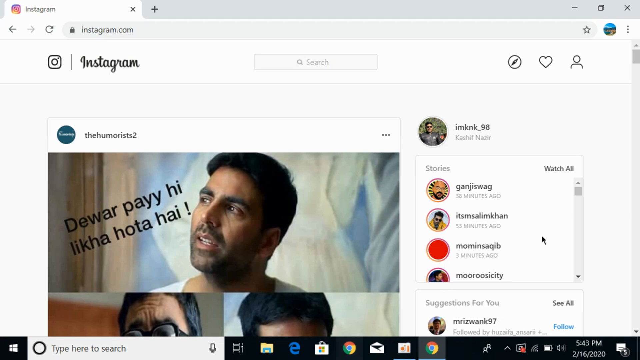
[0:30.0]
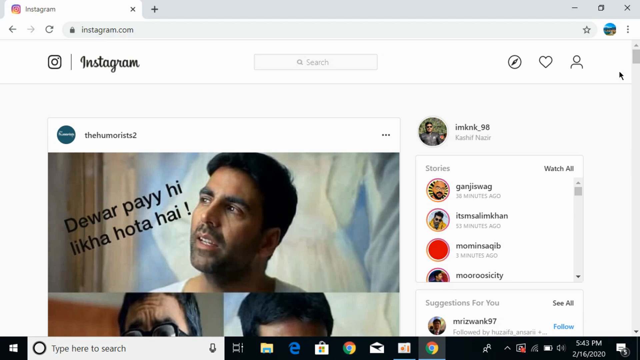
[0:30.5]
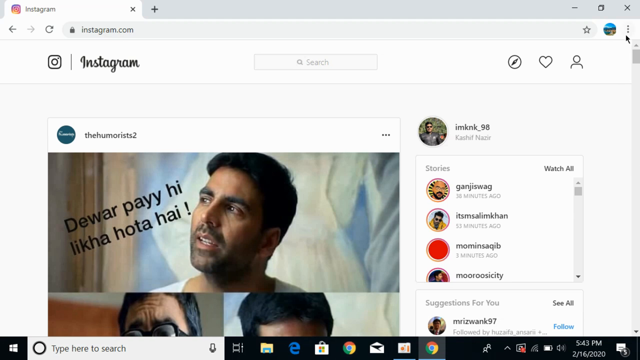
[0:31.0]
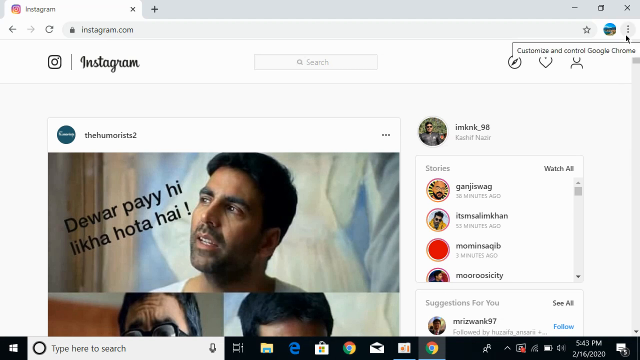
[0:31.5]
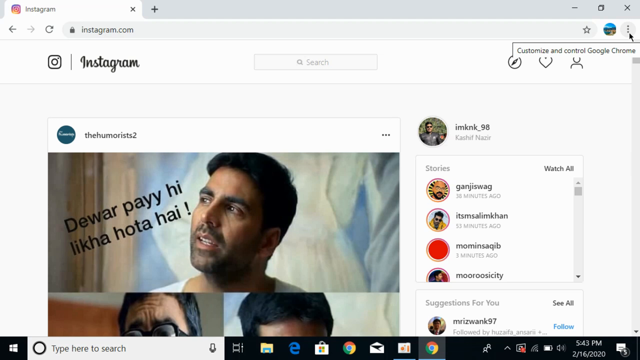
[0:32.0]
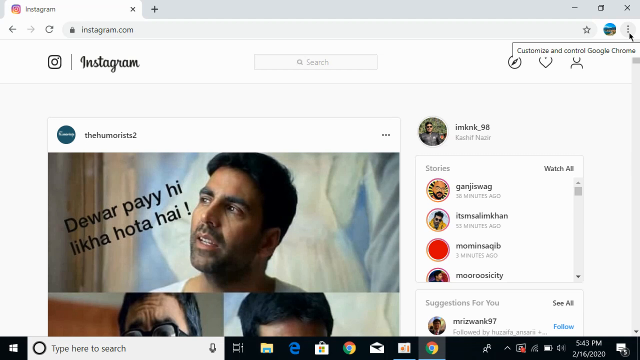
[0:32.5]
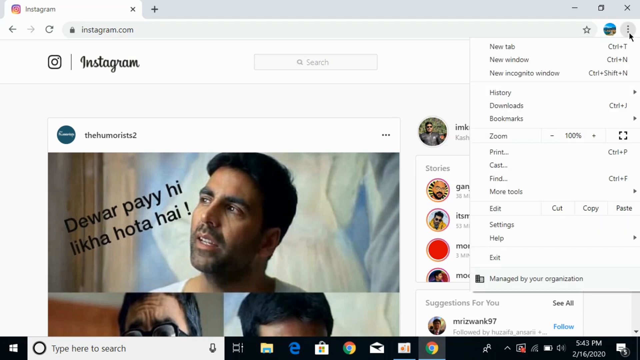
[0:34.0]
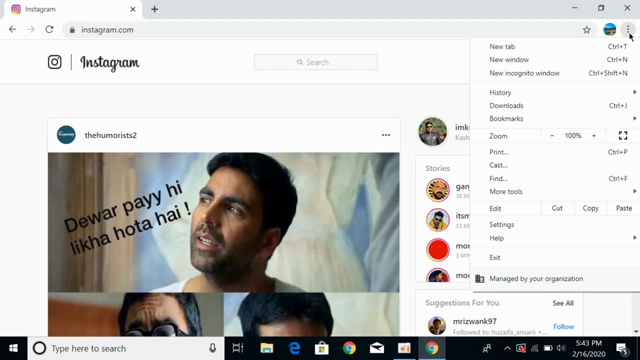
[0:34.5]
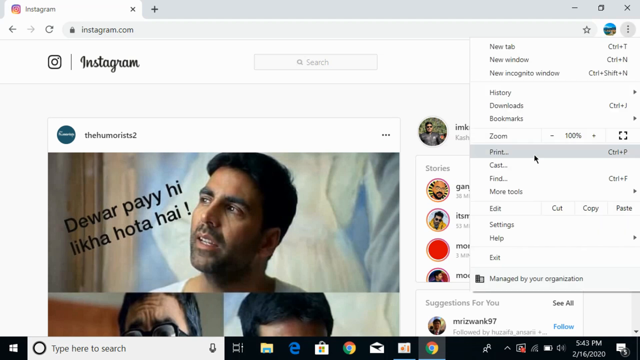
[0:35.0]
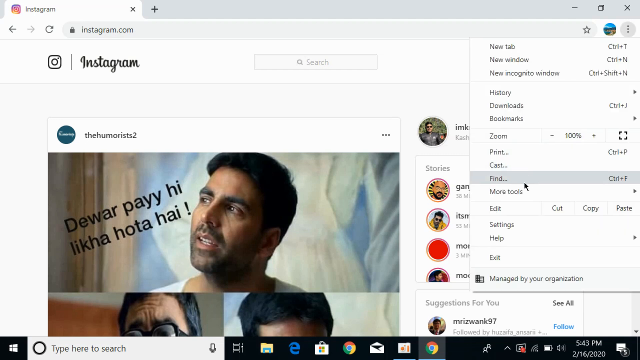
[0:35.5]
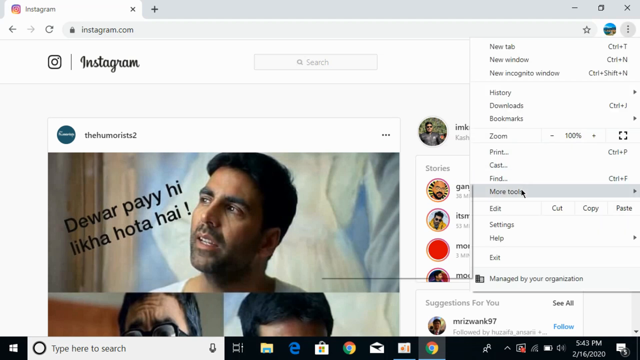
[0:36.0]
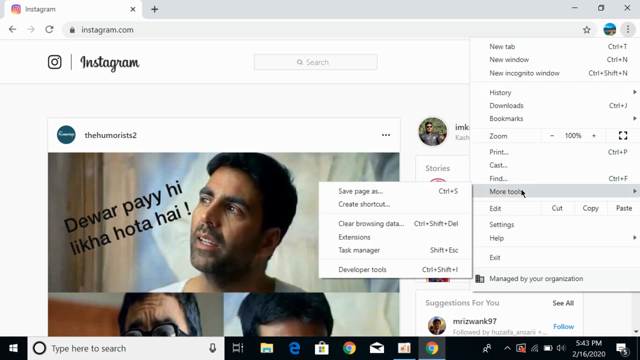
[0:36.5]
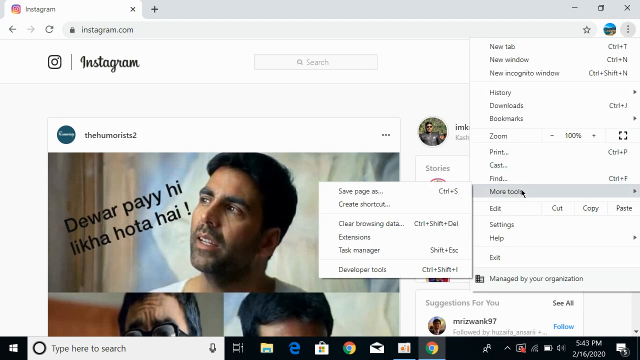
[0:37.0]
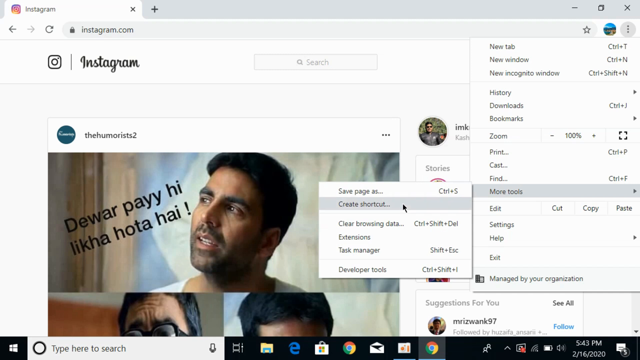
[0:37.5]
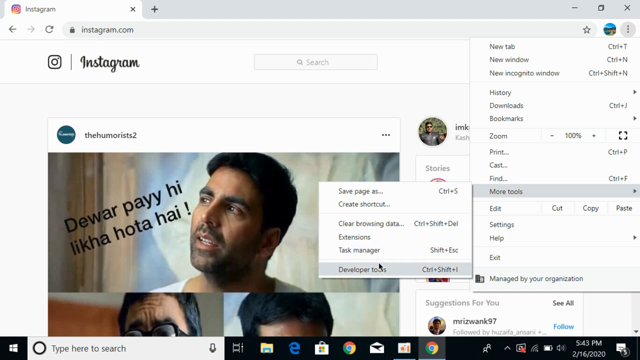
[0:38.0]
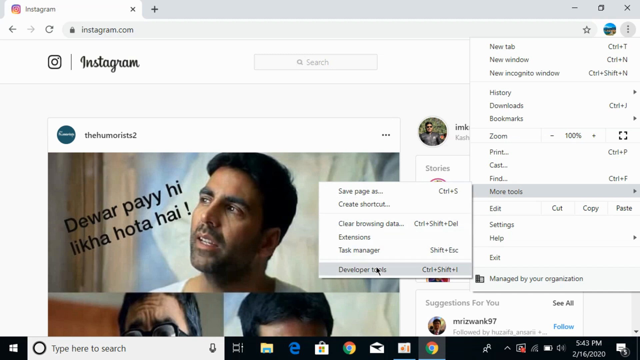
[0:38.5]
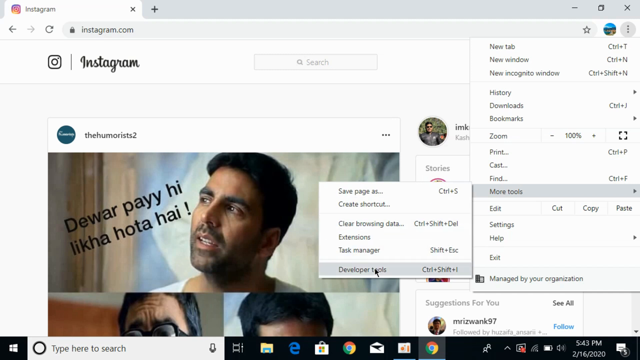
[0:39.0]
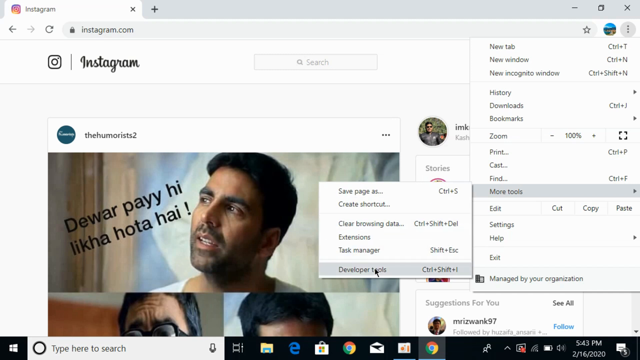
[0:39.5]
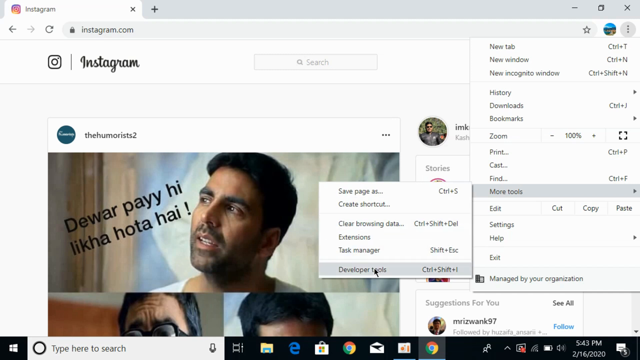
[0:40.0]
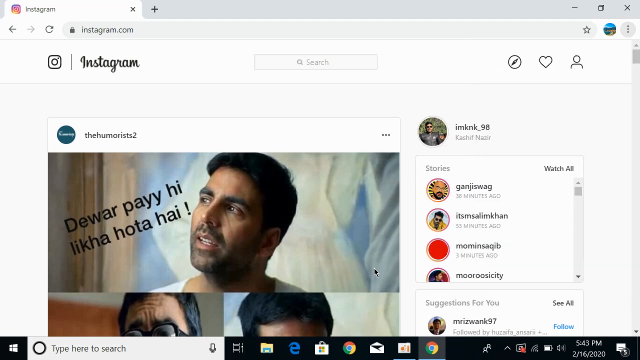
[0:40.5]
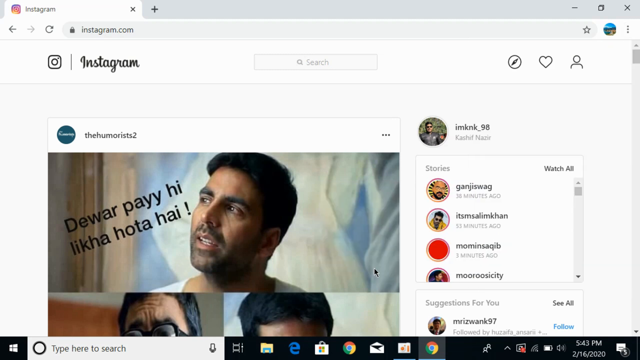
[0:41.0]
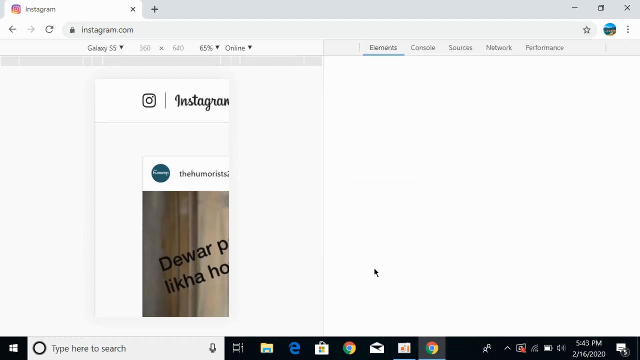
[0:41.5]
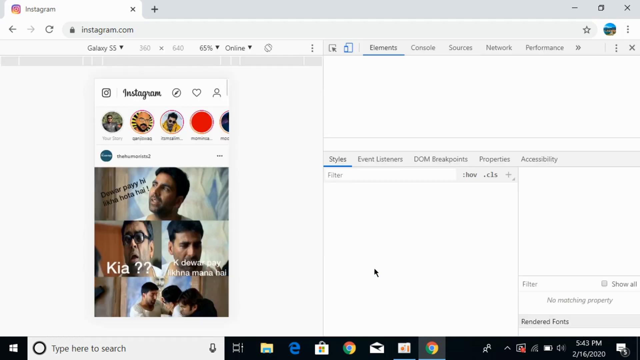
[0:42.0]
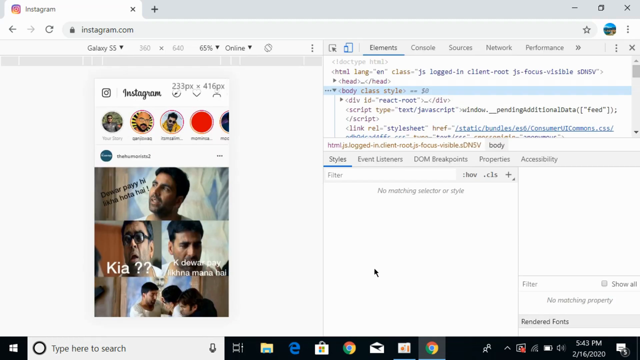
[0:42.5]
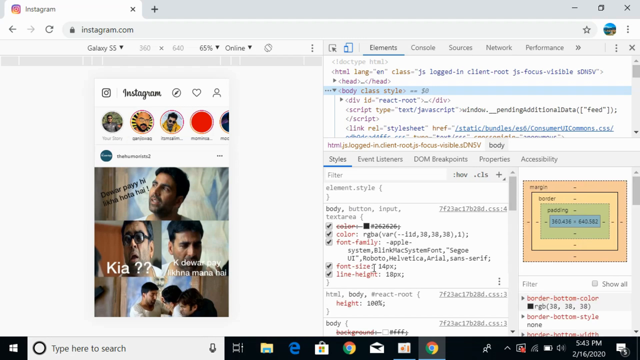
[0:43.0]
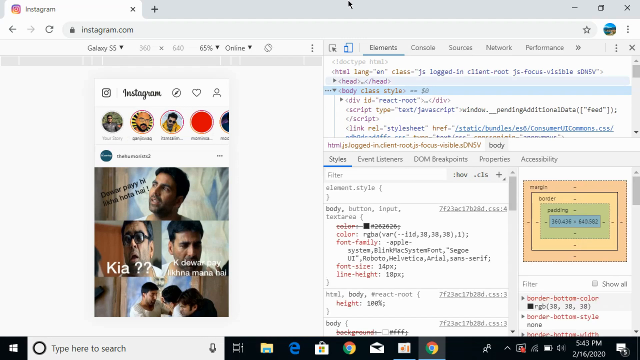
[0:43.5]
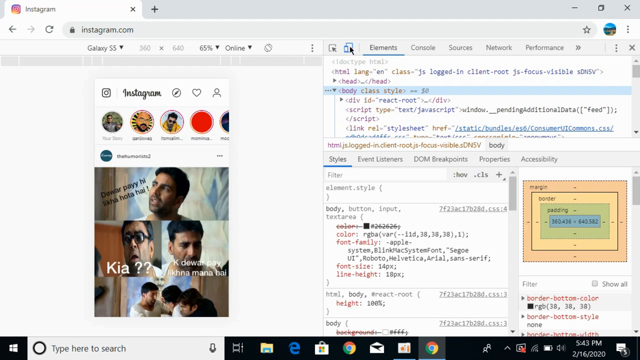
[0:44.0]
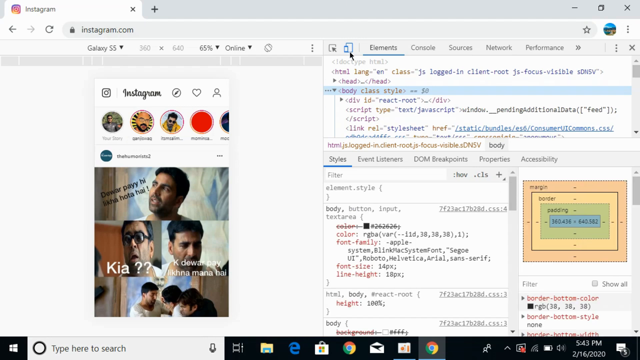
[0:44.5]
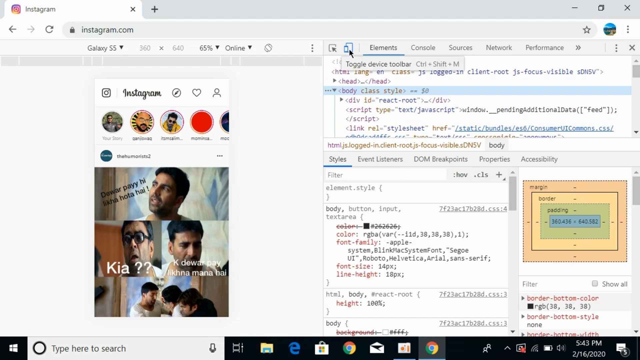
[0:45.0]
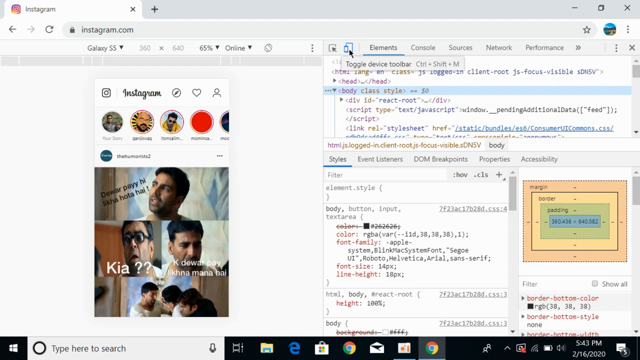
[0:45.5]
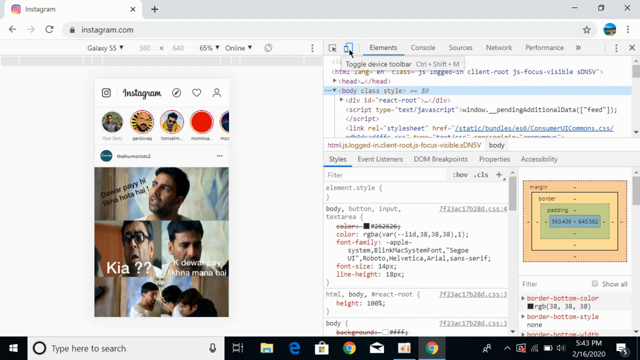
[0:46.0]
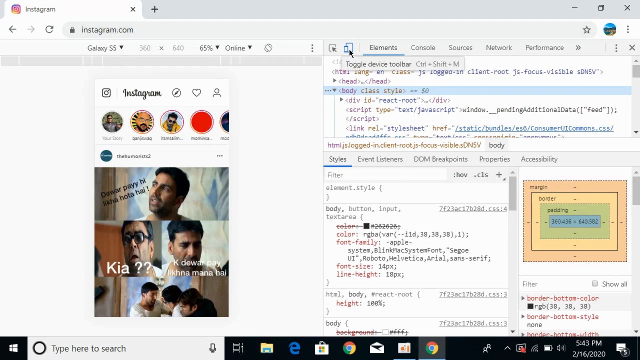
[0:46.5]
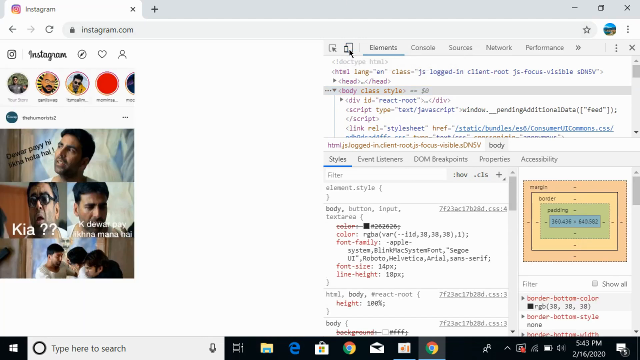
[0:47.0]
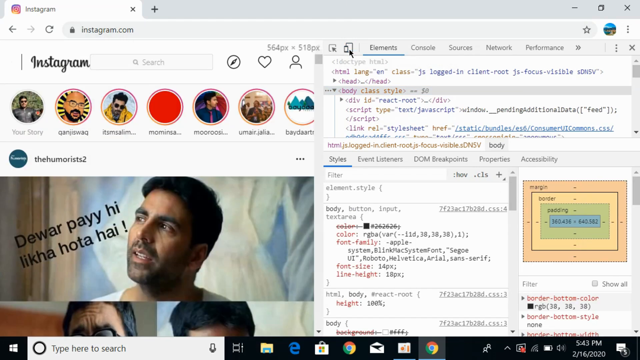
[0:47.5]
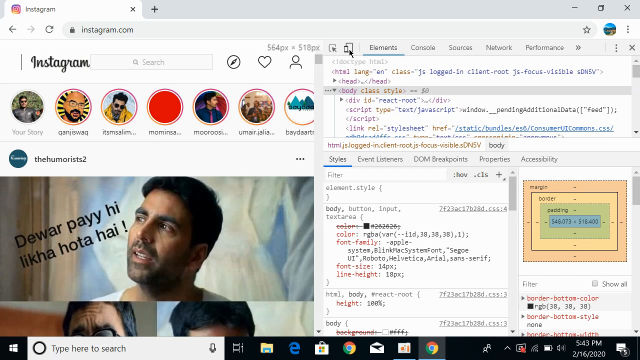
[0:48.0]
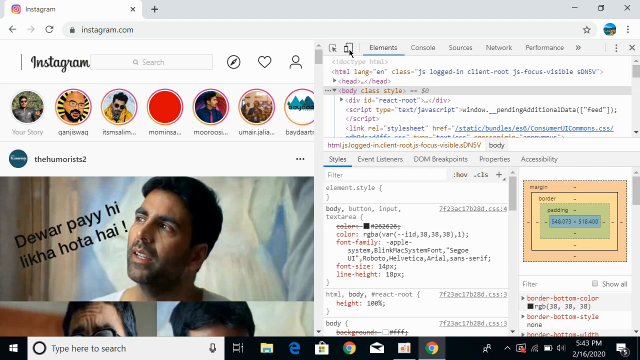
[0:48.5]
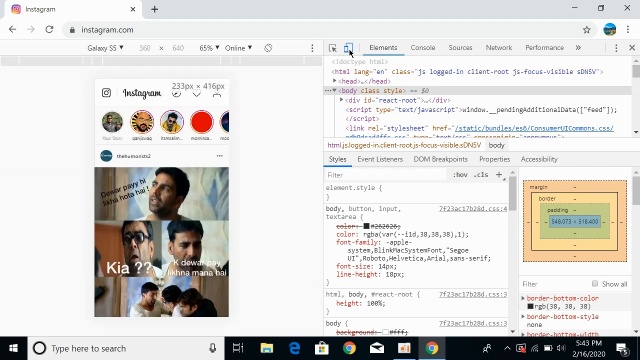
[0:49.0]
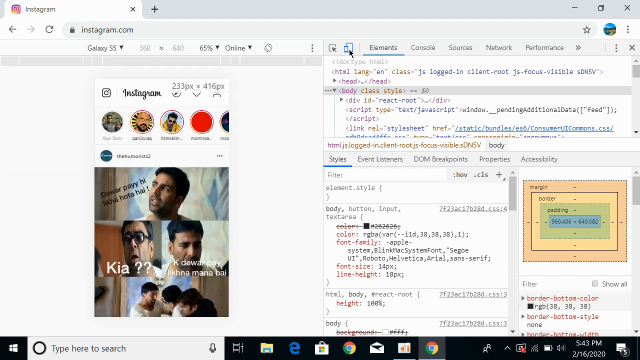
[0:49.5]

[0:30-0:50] An Instagram profile of a man who appears to be in his 40s, maybe late 40s, is on screen, with three pages displayed. His Instagram name apparently reads "the Humarista 2". The user goes to the top right corner and clicks on the three dots, and a pop-up shows options such as opening a new tab. They scroll down to more tools, then scroll right to the end, where the developer tools icon is. After they click on developer tools, the page is split in two: the Instagram profile on the left and a drop-down window showing all the developer tools on the right.